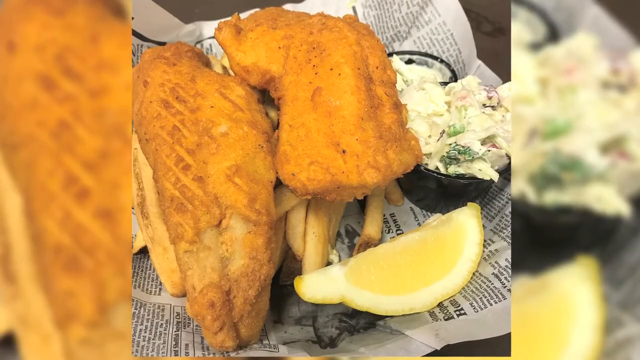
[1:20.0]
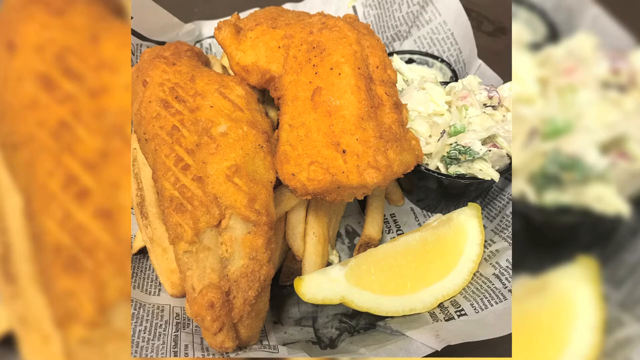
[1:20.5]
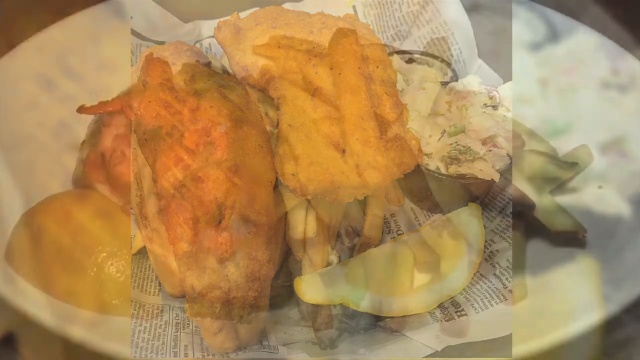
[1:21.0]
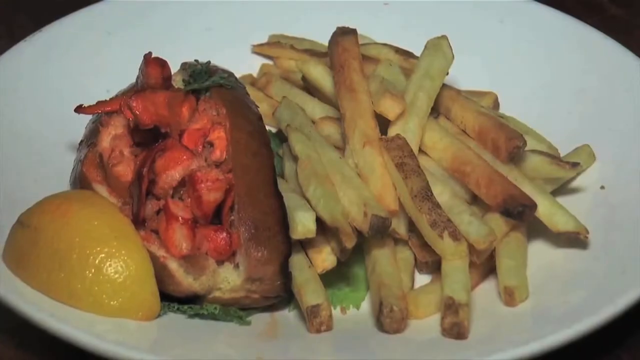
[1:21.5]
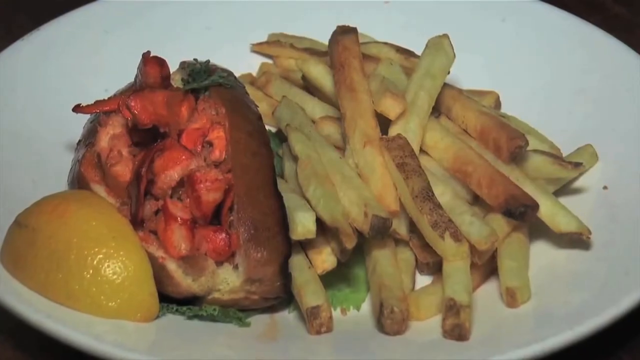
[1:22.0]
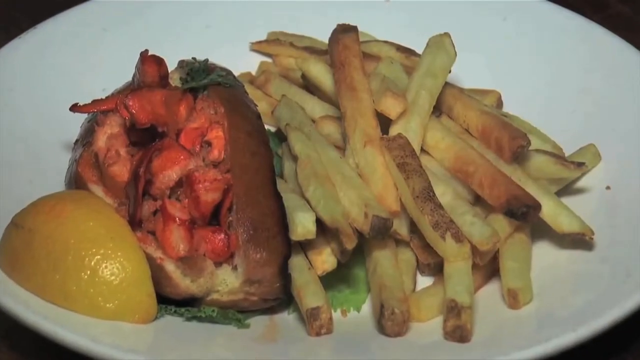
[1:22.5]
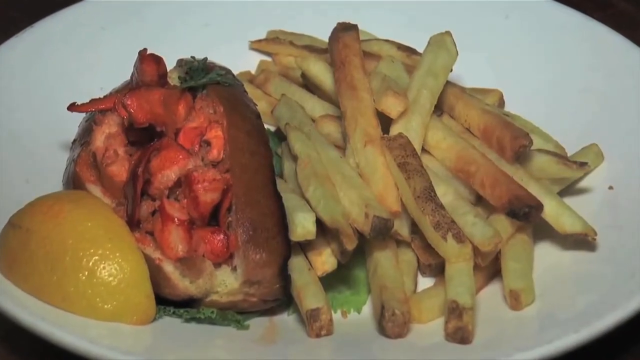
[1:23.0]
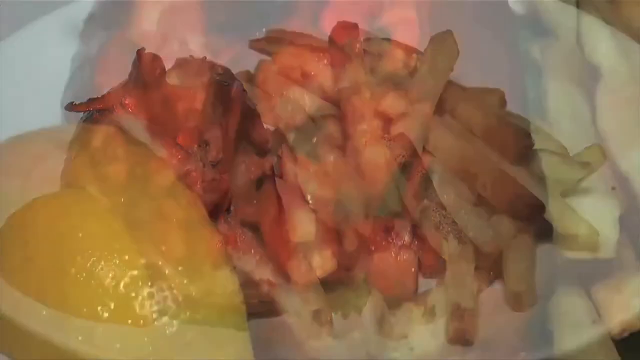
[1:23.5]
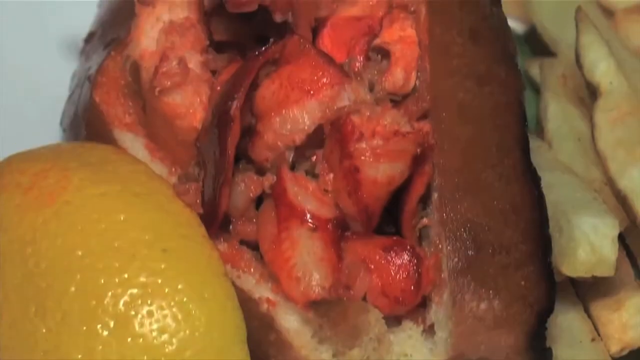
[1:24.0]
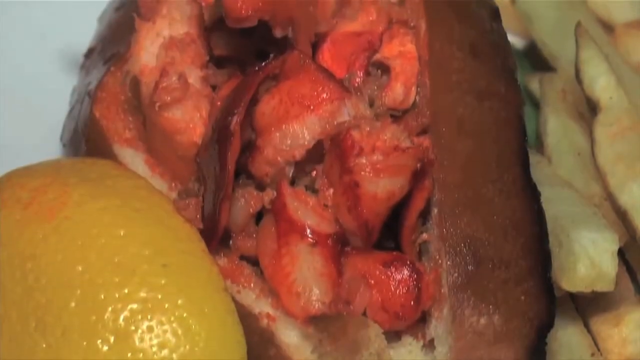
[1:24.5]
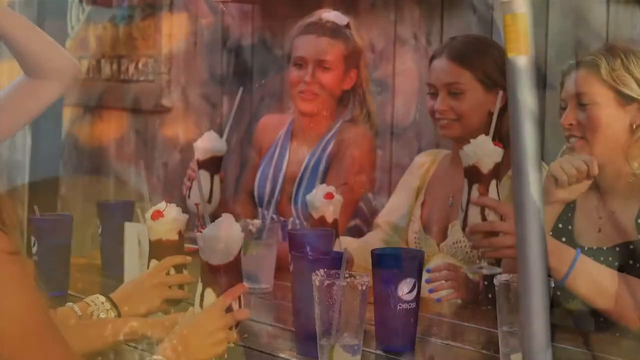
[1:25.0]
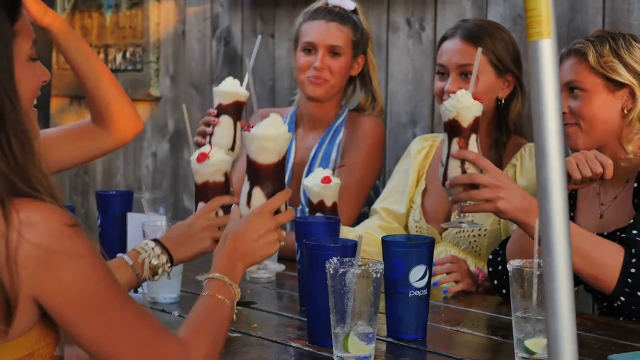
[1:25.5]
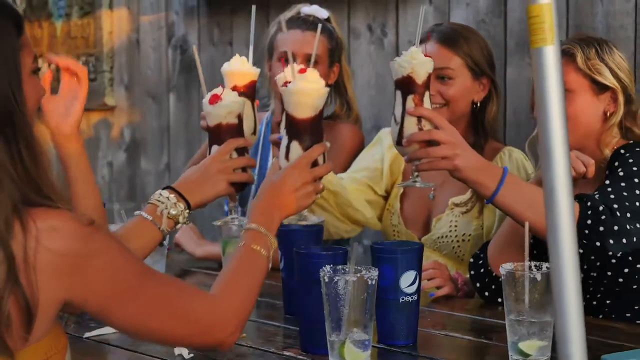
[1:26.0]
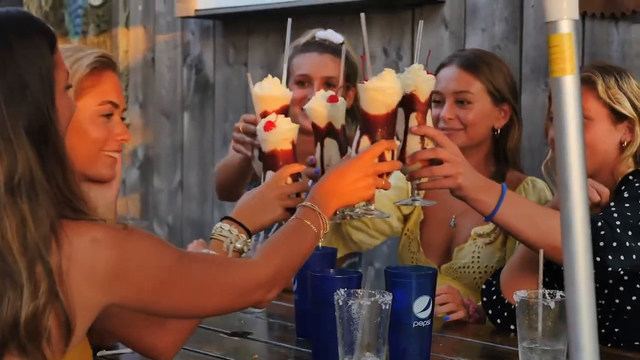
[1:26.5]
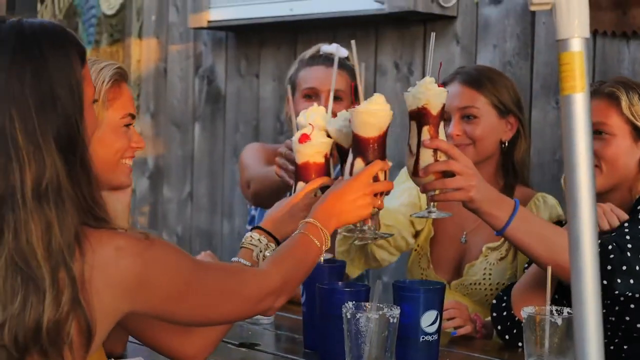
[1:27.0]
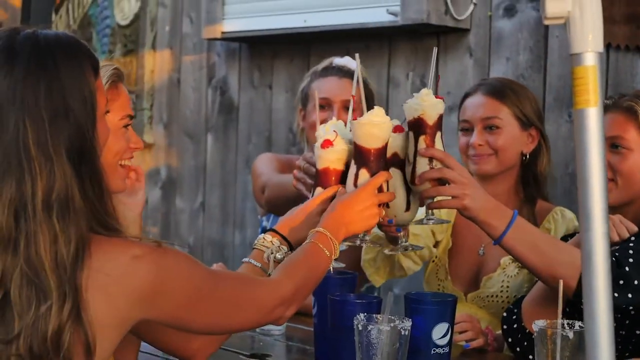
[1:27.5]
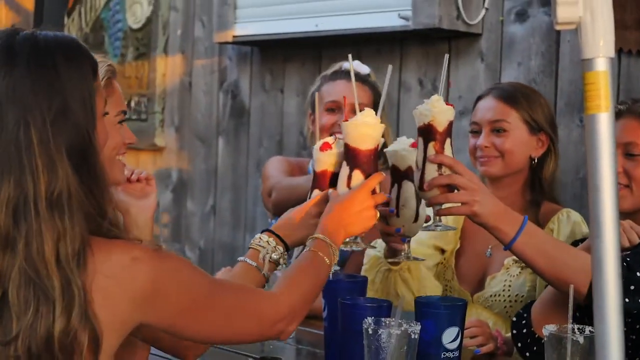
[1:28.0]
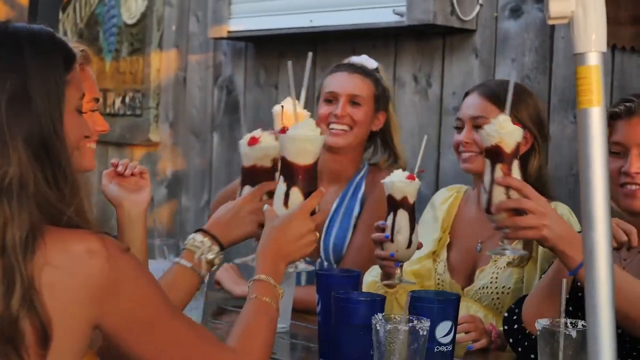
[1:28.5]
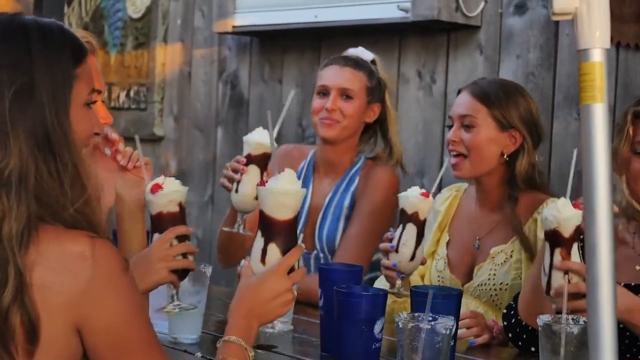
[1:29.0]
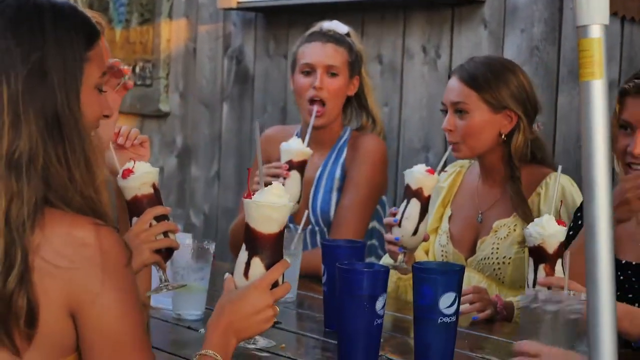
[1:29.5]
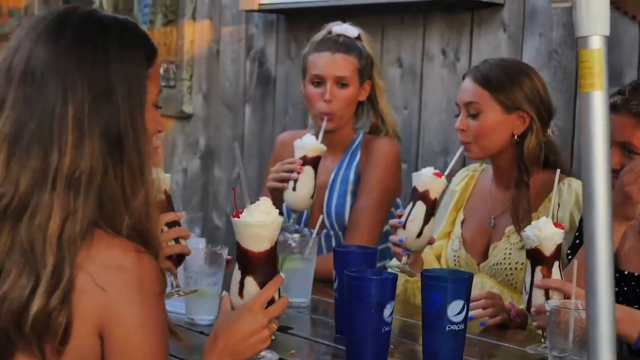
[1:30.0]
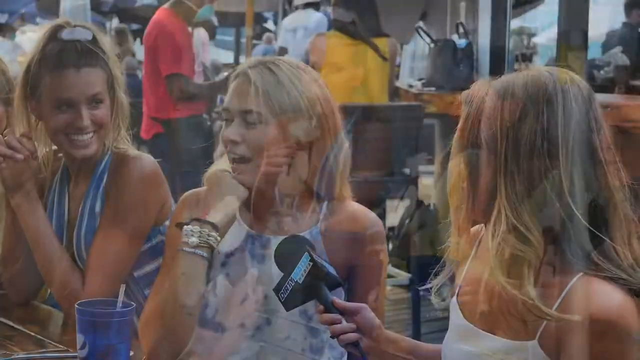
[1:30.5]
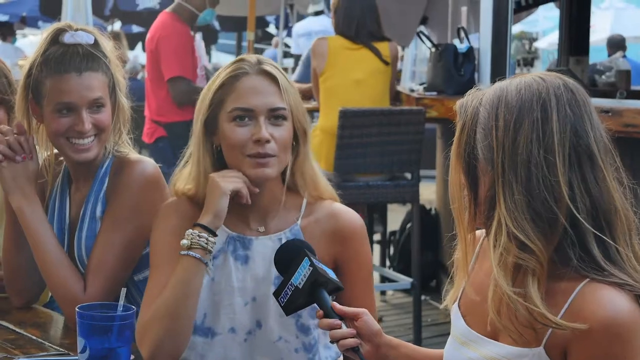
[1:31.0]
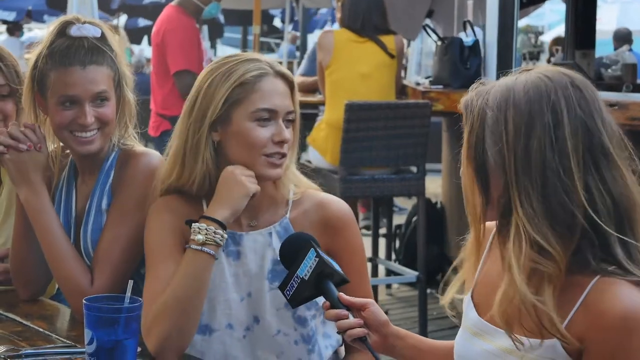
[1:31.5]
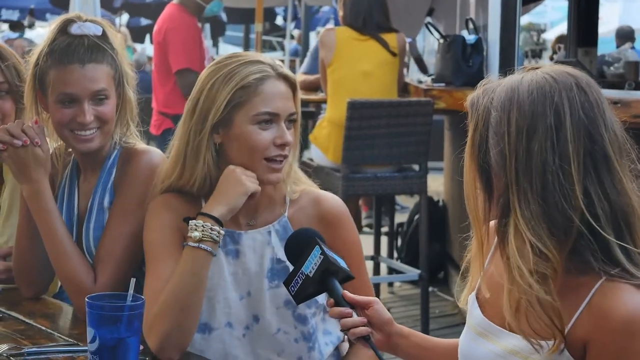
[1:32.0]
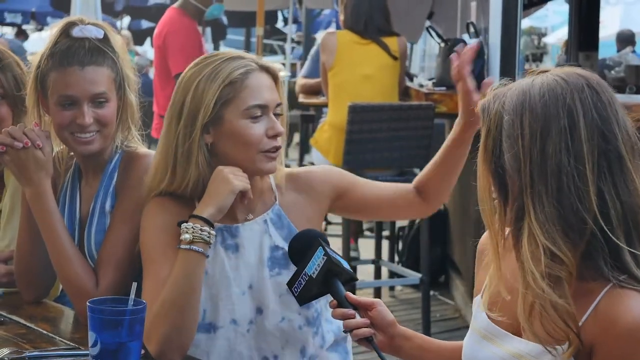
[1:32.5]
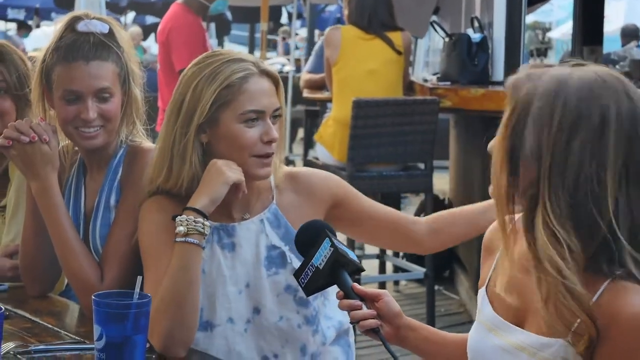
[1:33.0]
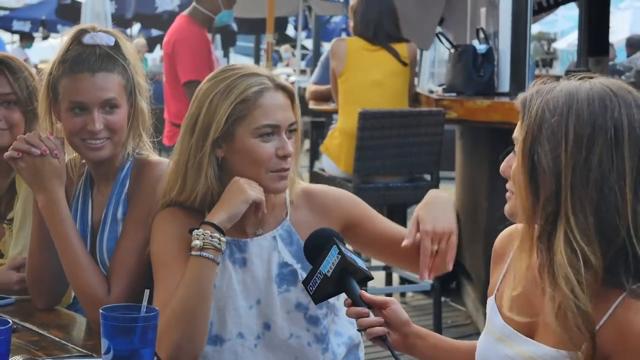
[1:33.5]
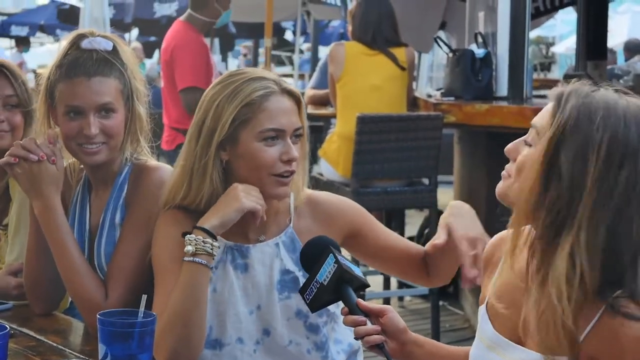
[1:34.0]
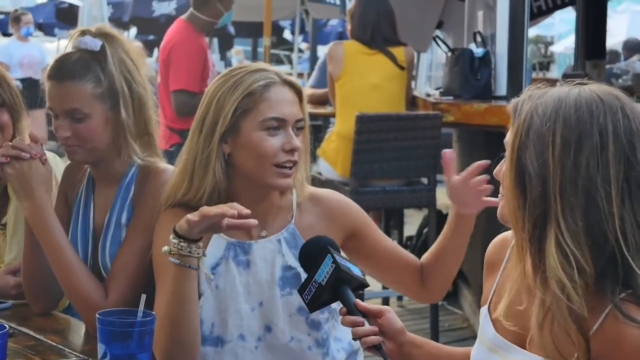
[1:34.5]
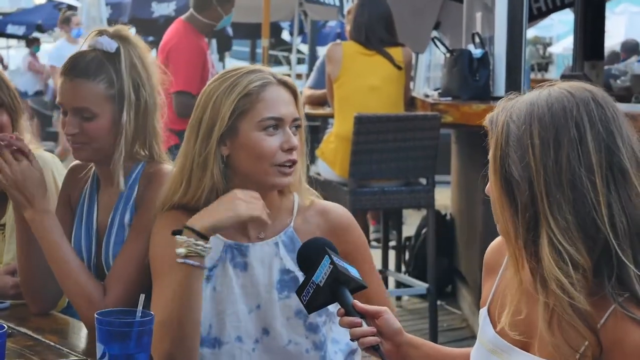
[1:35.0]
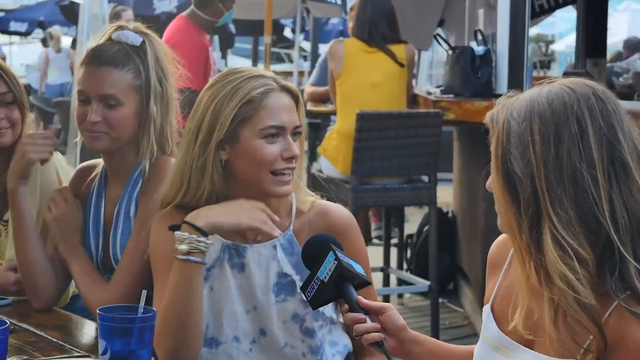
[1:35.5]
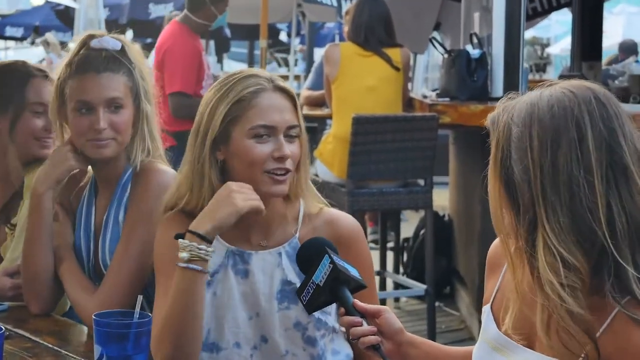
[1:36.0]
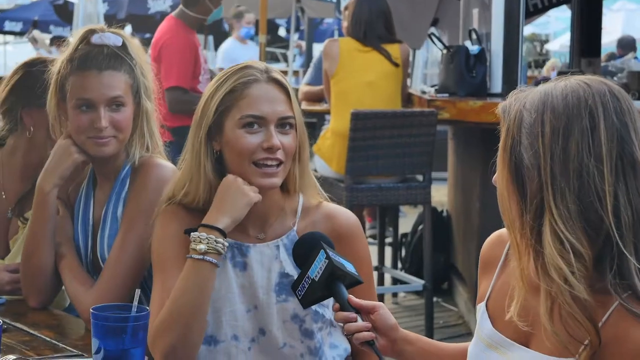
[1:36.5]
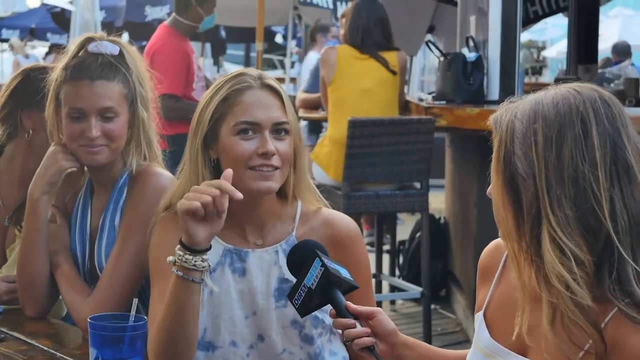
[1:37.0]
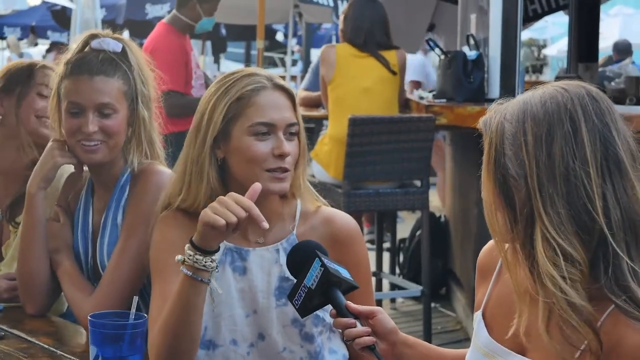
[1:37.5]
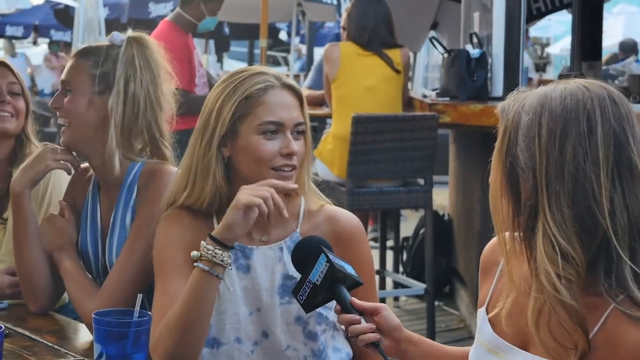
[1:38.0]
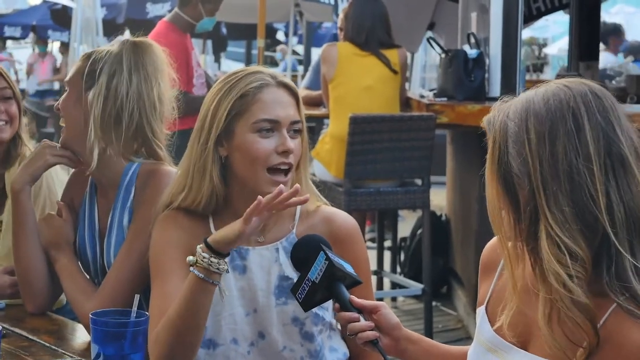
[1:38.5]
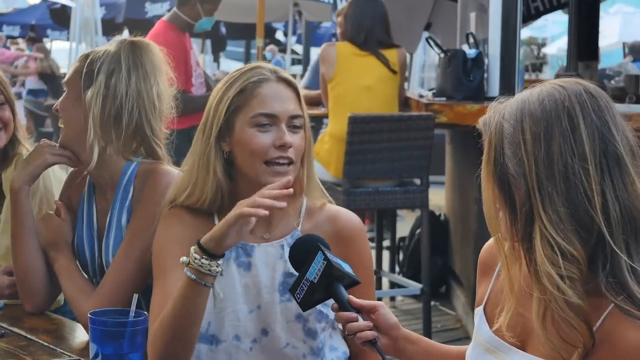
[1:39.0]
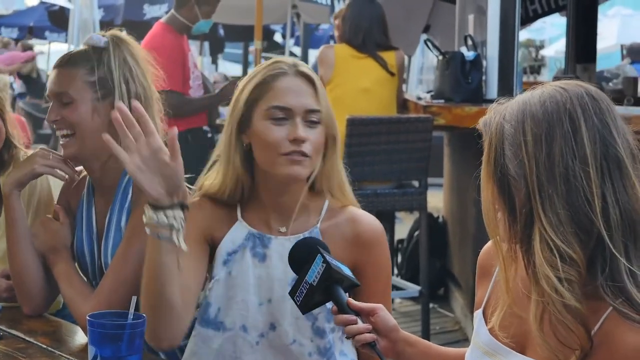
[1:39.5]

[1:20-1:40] Fried chicken is served on a newspaper with an orange lemon and a salad on the side, looking juicy. Then there is a burger served with red lobster, fries and a lemon on the side on a white plate. Next, ladies enjoy ice cream that seems to be strawberry and chocolate, holding it up in a cheer, laughing and drinking it through a straw. The reporter interviews a lady in a white top wearing a black bracelet, with long blonde hair; a friend beside her wears a blue striped top and seems to be enjoying her time. The lady explains something to the reporter and seems very happy.